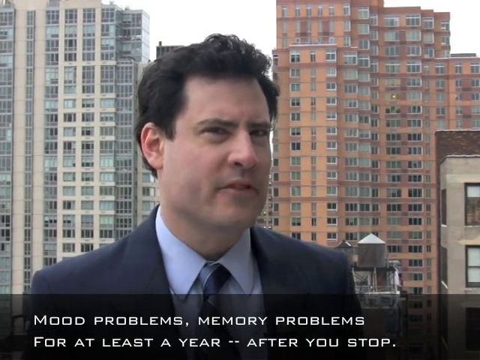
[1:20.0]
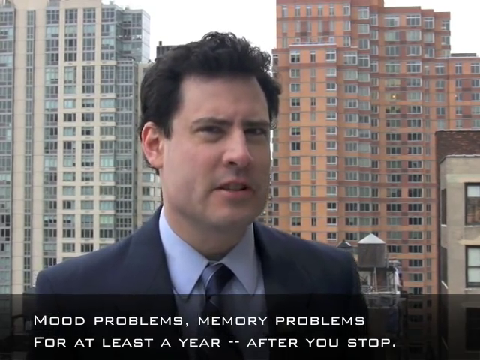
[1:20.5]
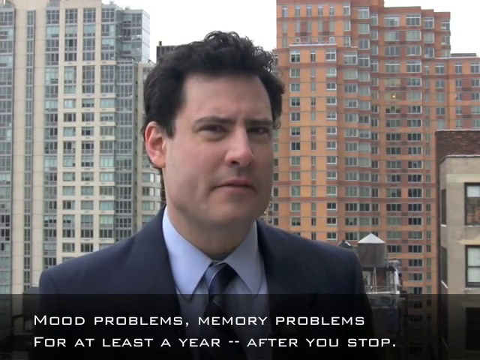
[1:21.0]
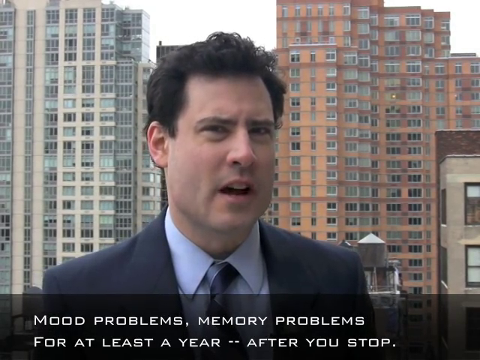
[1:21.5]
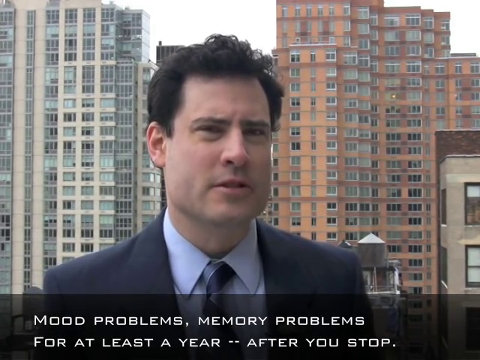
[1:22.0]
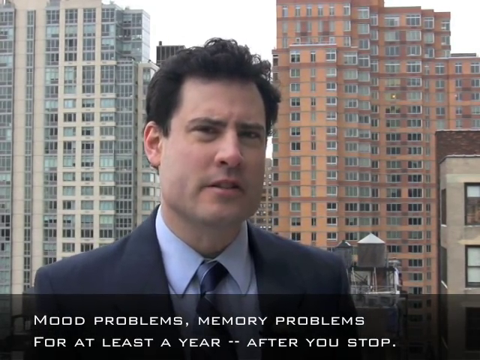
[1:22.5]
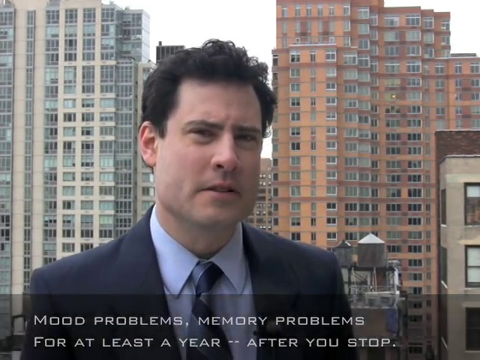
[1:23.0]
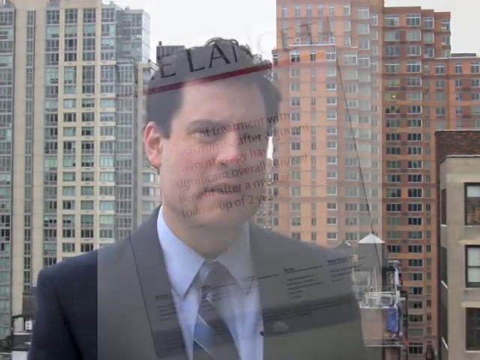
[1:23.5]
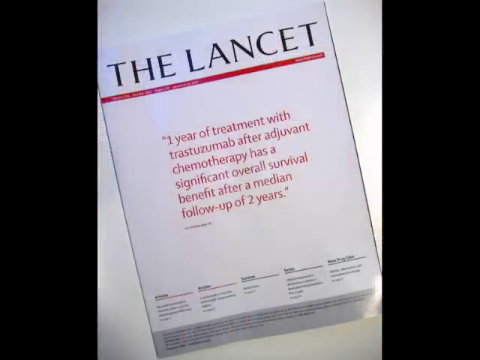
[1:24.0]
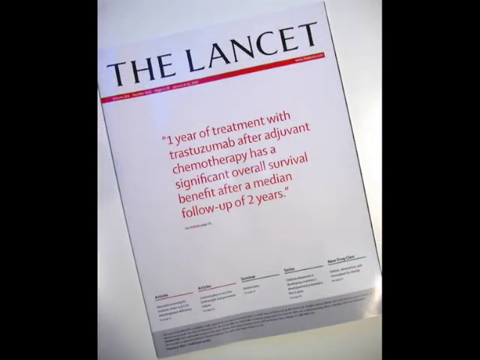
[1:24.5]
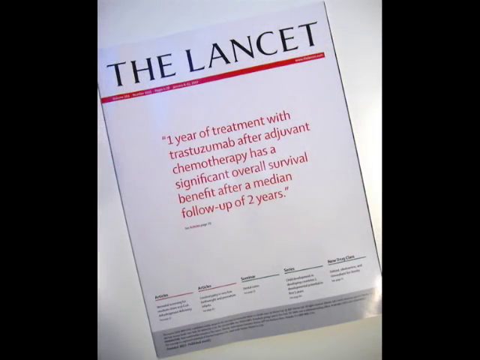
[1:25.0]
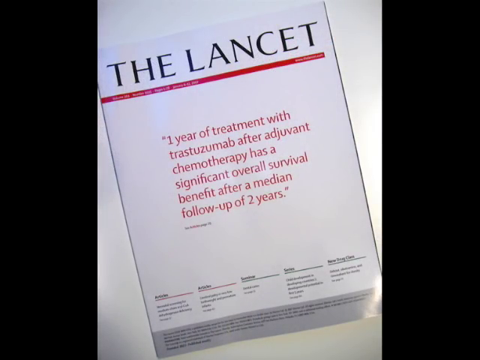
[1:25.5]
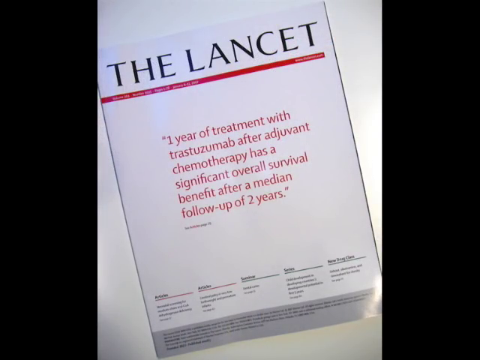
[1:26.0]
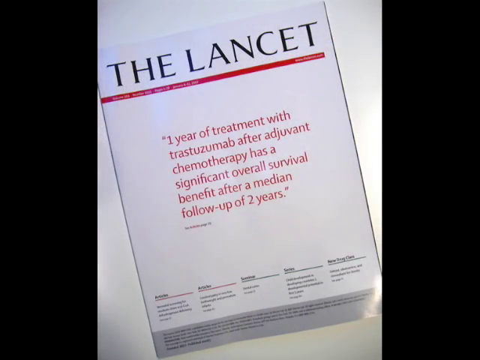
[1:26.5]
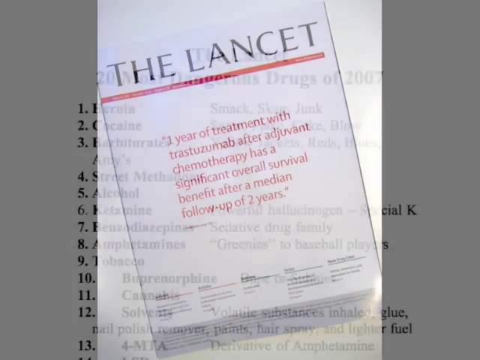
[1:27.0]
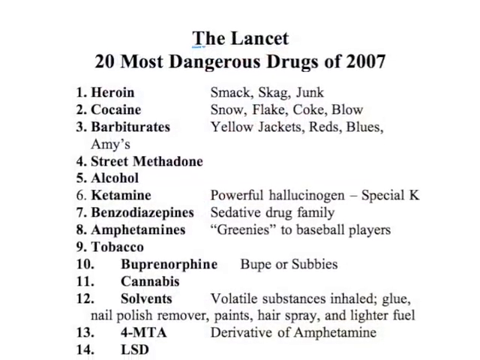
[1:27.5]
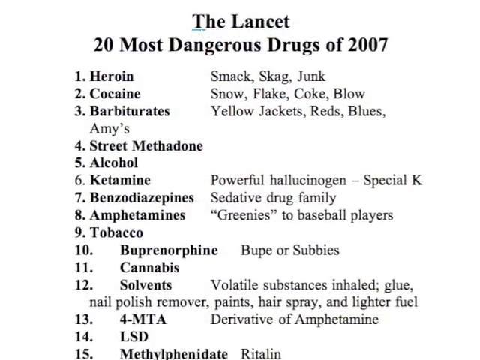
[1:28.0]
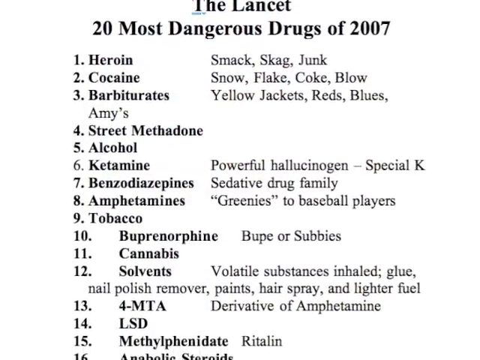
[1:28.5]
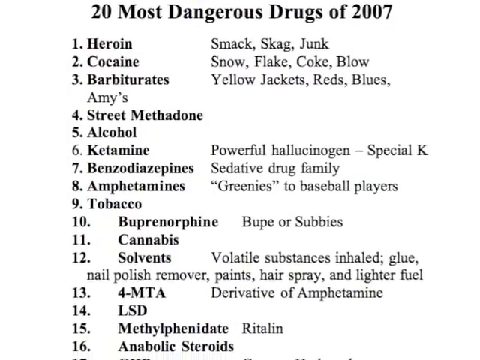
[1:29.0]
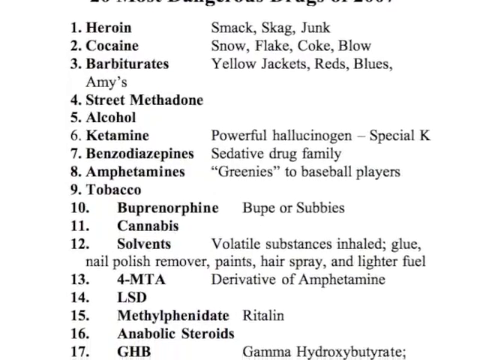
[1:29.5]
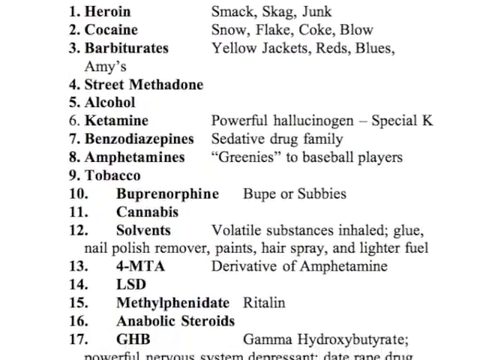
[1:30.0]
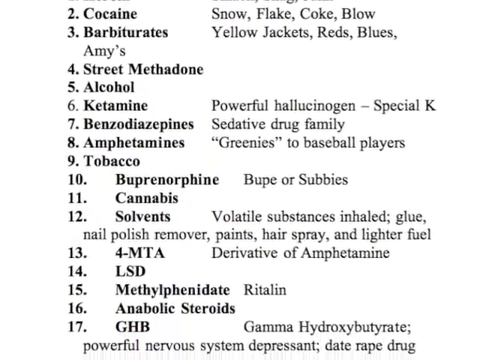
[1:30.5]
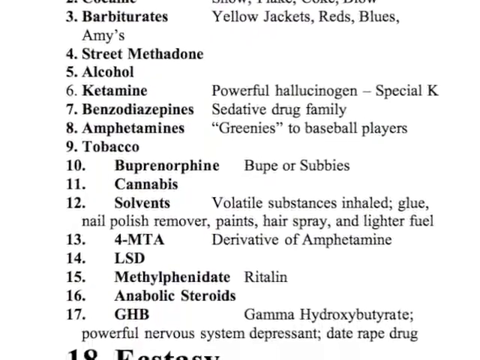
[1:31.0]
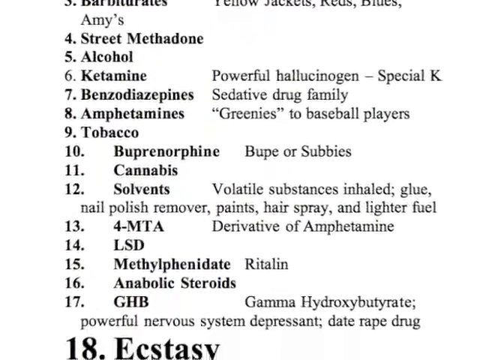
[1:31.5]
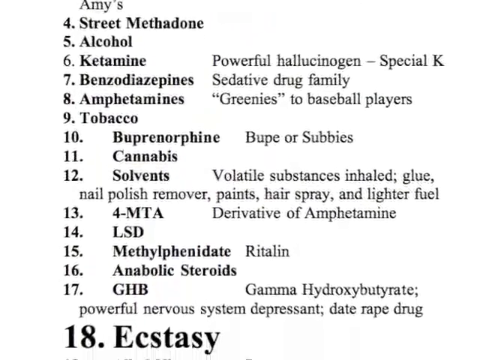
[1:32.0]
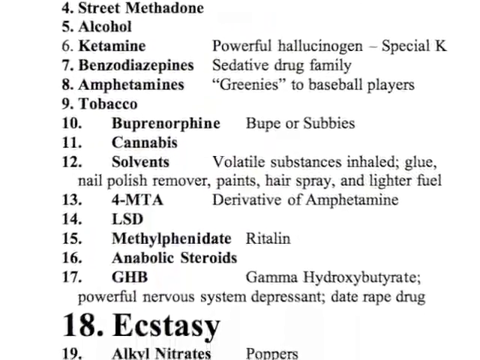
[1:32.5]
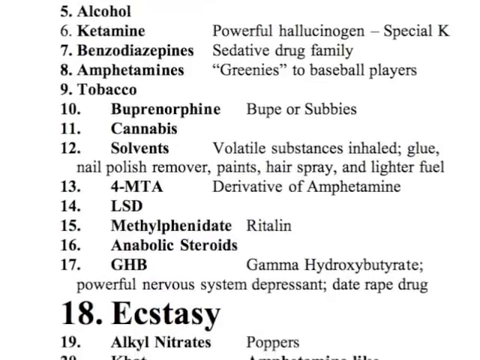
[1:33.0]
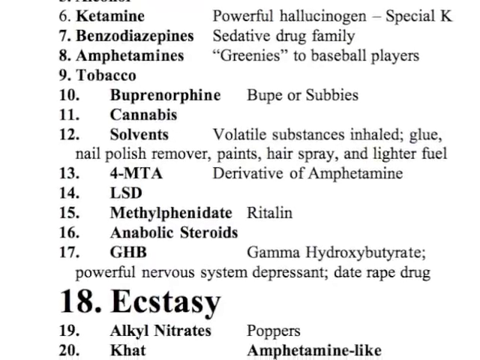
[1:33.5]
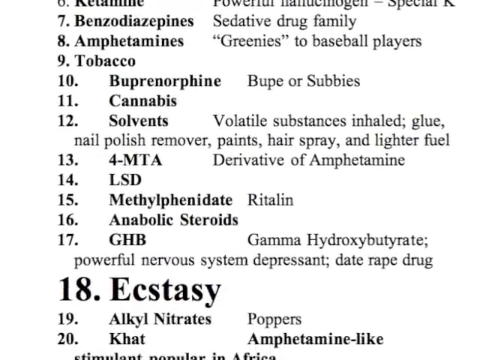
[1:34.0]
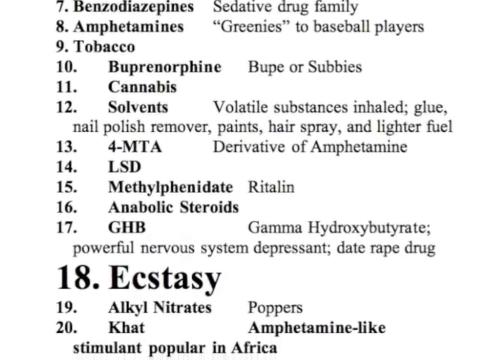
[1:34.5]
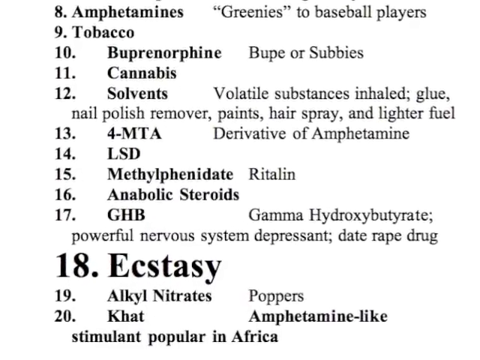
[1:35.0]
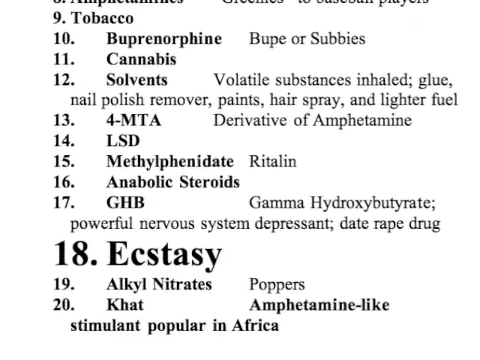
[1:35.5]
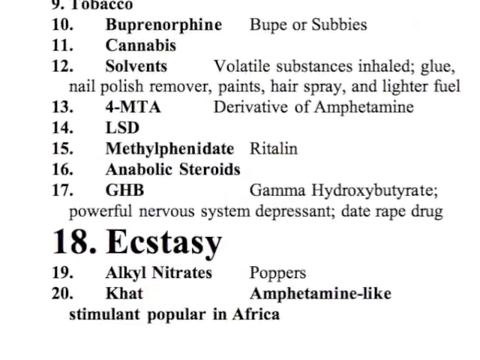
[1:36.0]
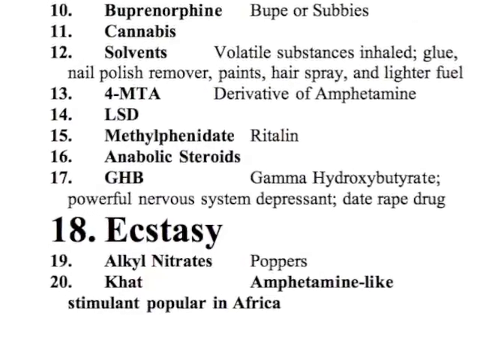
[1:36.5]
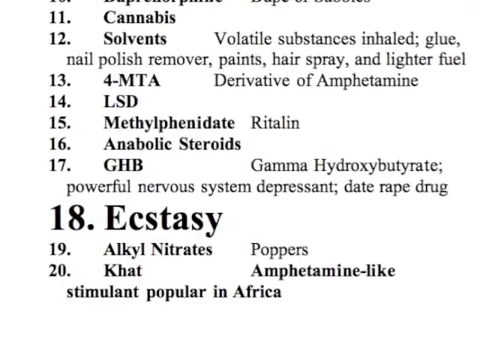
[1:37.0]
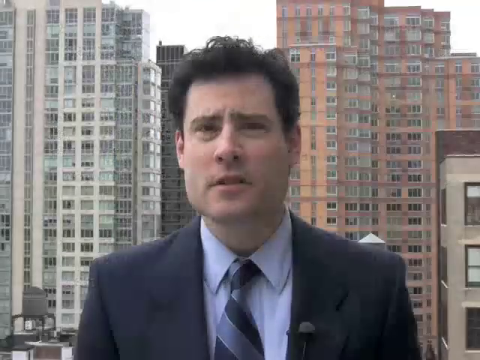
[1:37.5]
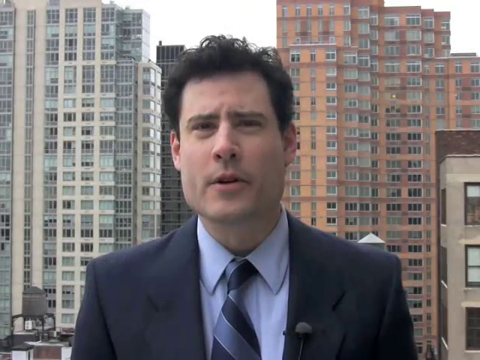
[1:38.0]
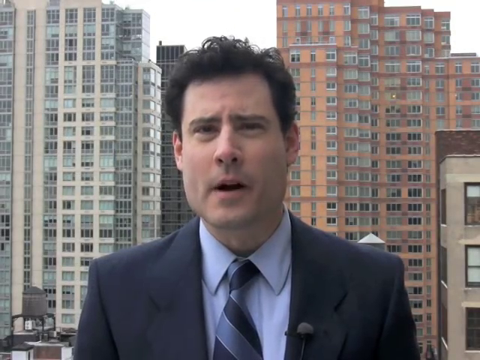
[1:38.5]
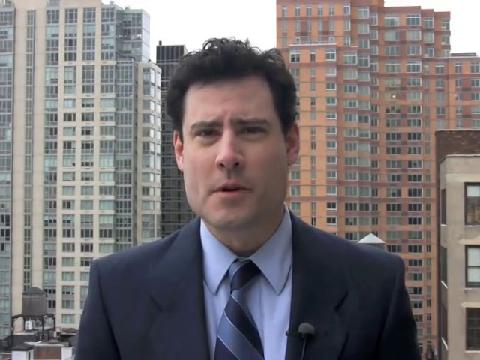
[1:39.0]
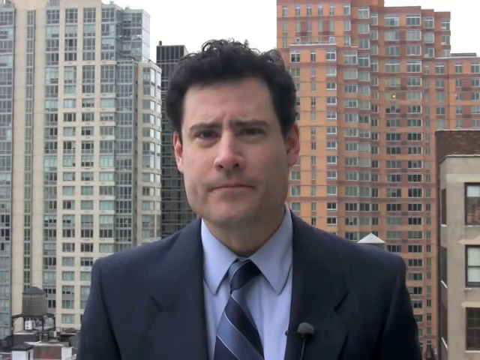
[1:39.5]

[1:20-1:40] A young man, perhaps in his early 30s, discusses the drug ecstasy in a back-and-forth with a young woman. He wears a dark suit, blue professional attire and a tie, and looks slightly to the right. At the bottom of the screen, white text on a black background reads "mood problems, memory problems for at least a year after you stop." Next, information about the 20 most dangerous drugs appears against a white background and scrolls down: number one is heroin, next is cocaine, third is barbiturates, fourth is street methadone, fifth is alcohol, seventh the benzos, eighth the amphetamines, ninth tobacco, tenth buprenorphine, eleventh cannabis and twelfth the solvents. Number 14 is LSD, 16 is anabolic steroids, and 18, highlighted in larger print, reads "ecstasy".